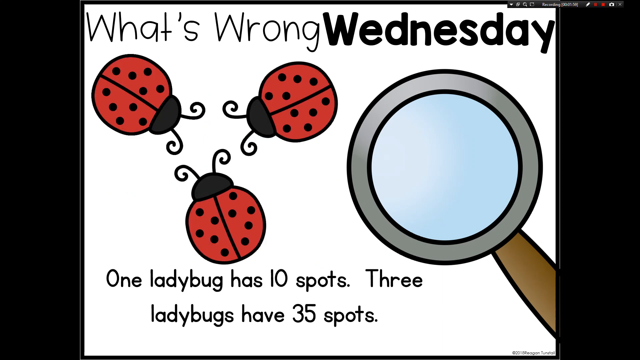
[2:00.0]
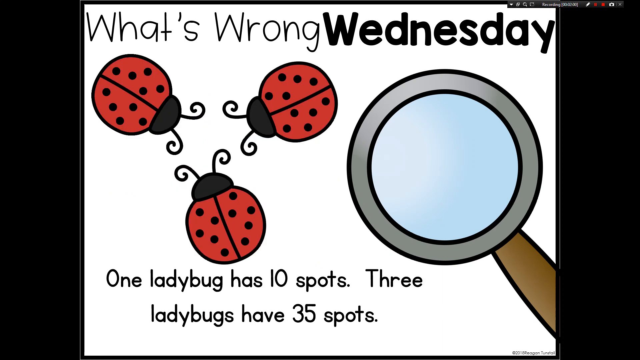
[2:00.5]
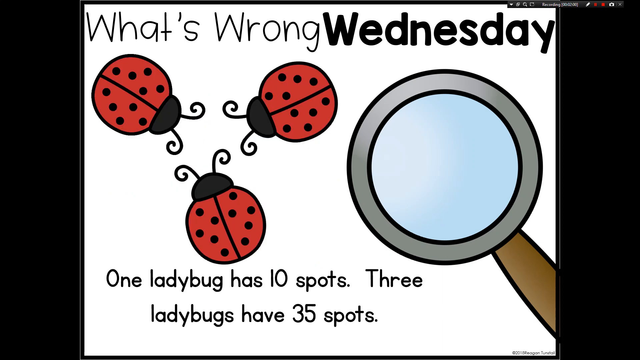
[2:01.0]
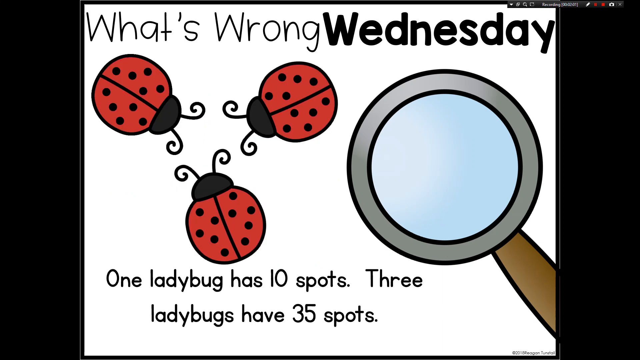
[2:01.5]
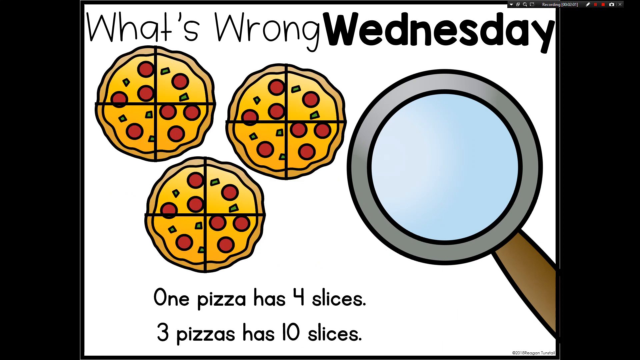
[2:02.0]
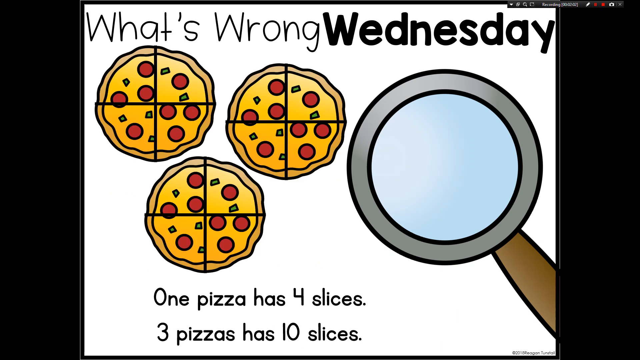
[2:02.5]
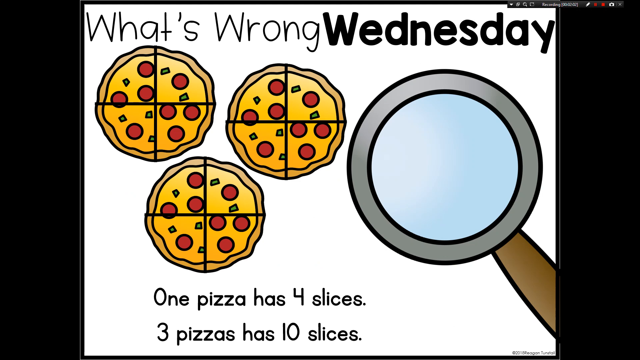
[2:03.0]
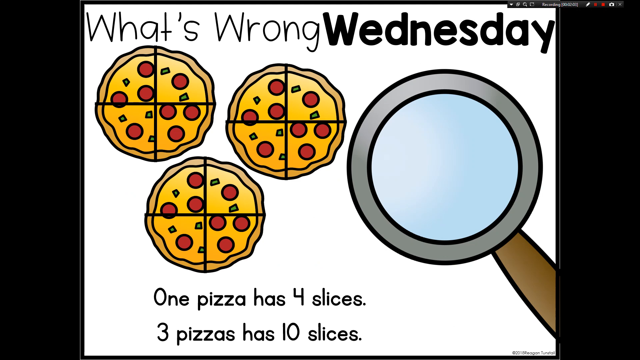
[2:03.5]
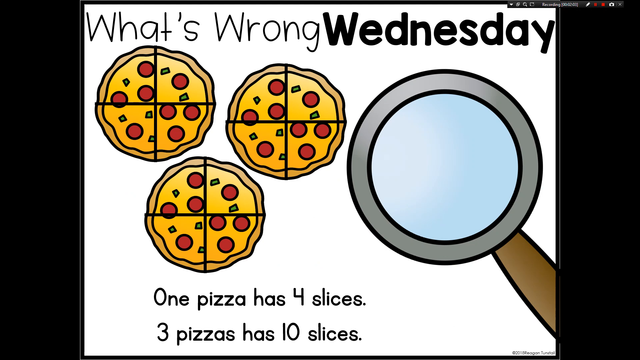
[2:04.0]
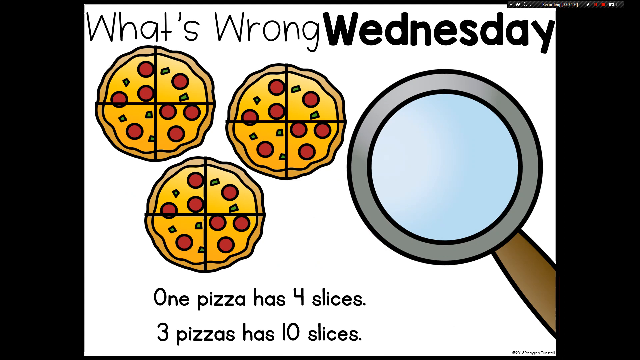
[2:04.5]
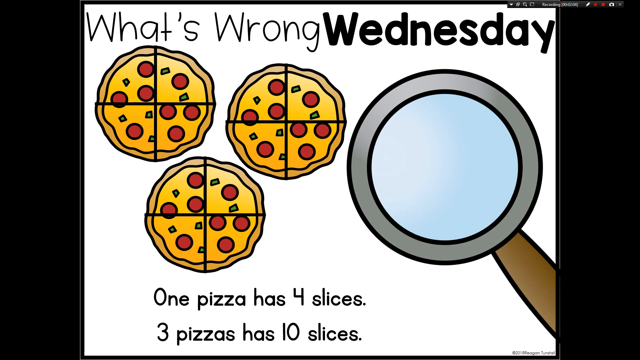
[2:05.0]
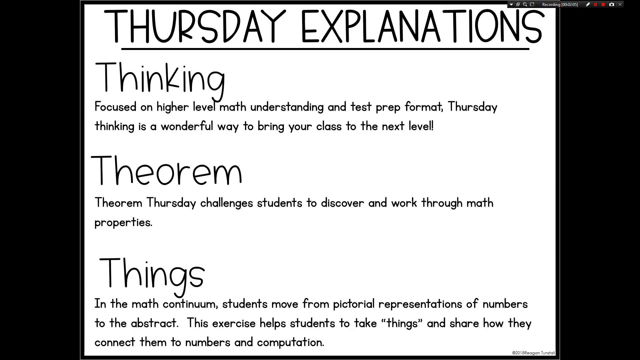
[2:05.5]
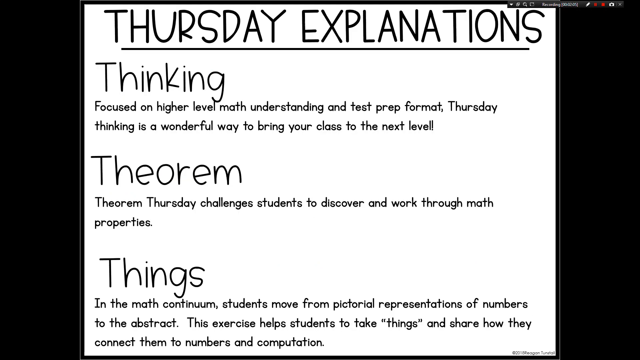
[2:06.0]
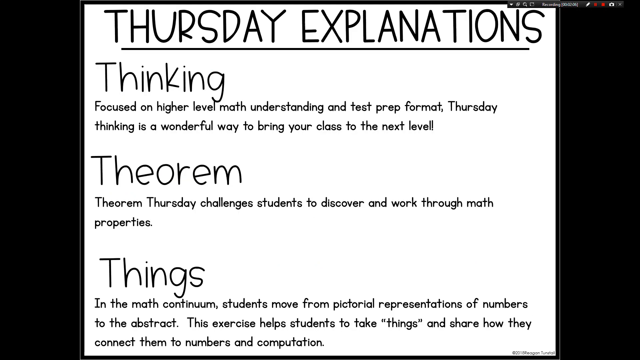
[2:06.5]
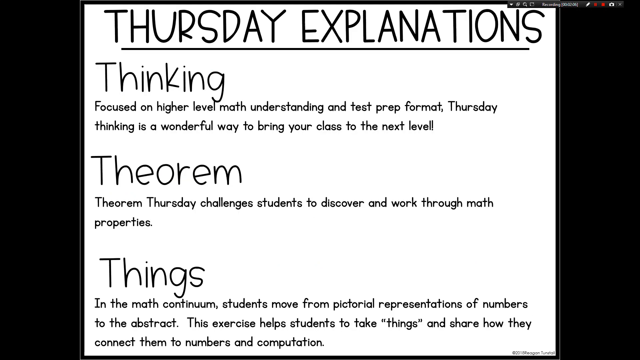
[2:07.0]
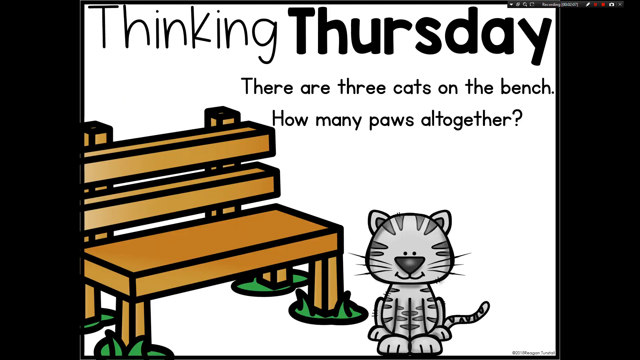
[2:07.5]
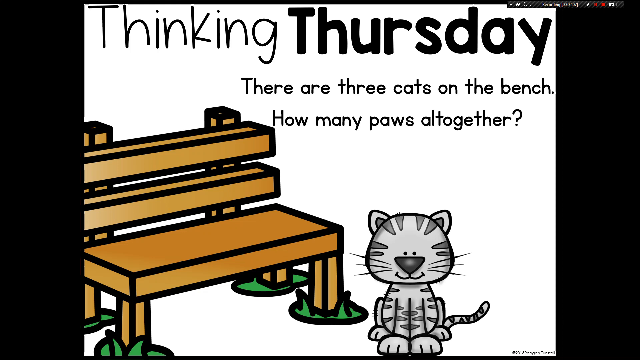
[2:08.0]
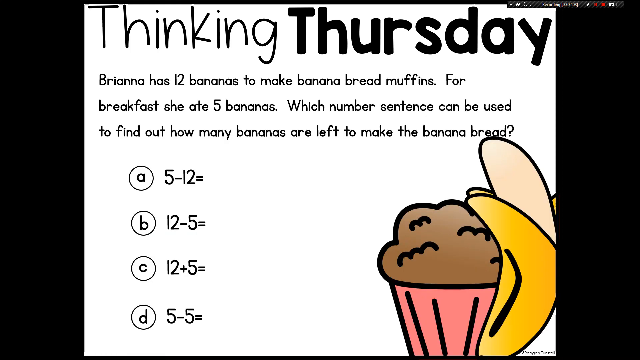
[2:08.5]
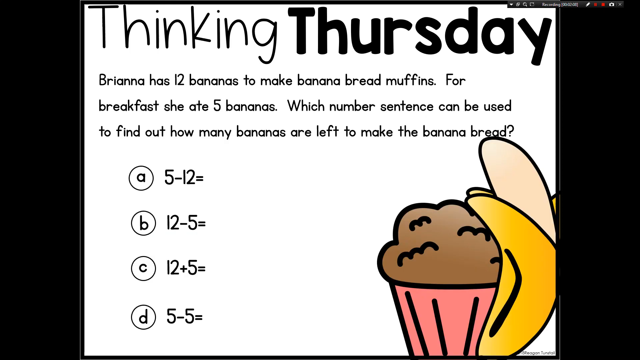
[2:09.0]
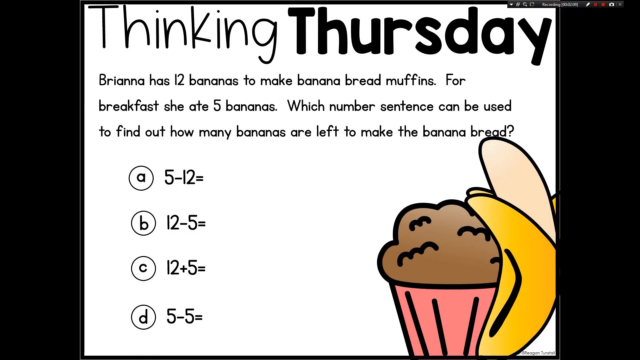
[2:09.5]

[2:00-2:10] A "What's wrong Wednesday" slide shows ladybugs and magnifying glasses with the text "One ladybug has 10 spots. Three ladybugs has 35 spots." Another problem concerns one item with four slices and three with 10 slices. Then "Thursday explanations" appears: "Thinking: Focus on higher level math understanding, test prep format. Thursday thinking is a wonderful way to bring your class to the next level." A Theorem Thursday section mentions "Challenging students to discover and work through math properties" and "Students move from pictorial representations of numbers to abstract." A "Thinking Thursday" problem reads "Brianna has 12 bananas to make banana bread muffins for breakfast" and asks which number sentence can be used, with options including A "5 minus 12", B "12 minus 5" and C "12 plus 5".